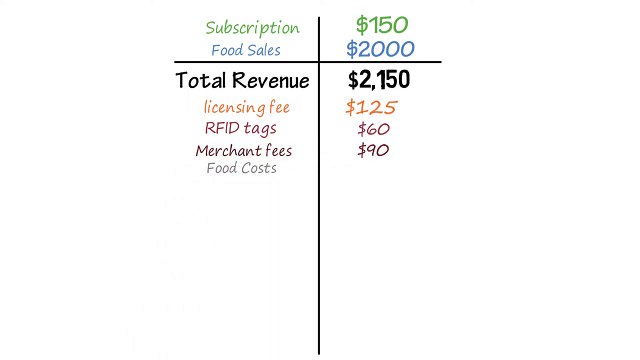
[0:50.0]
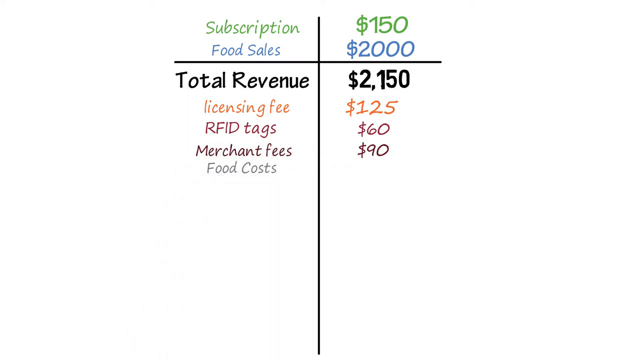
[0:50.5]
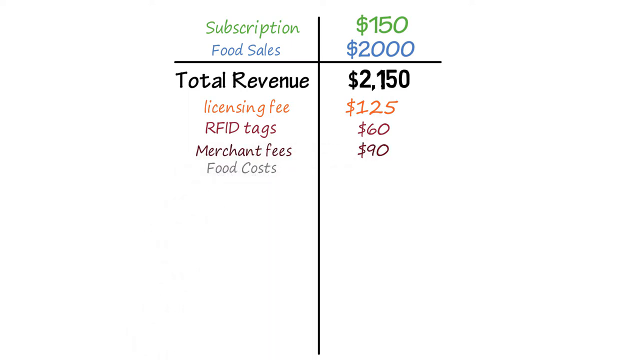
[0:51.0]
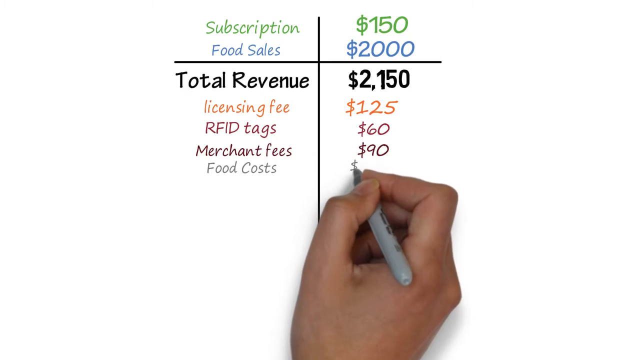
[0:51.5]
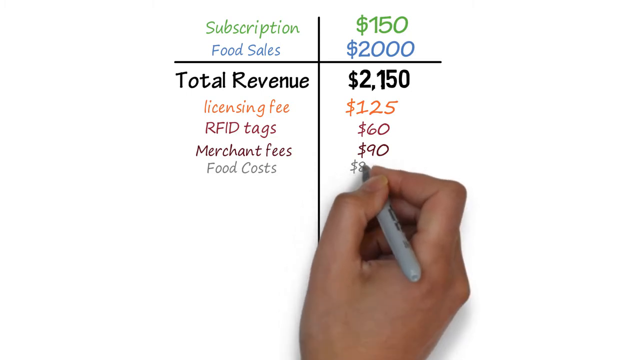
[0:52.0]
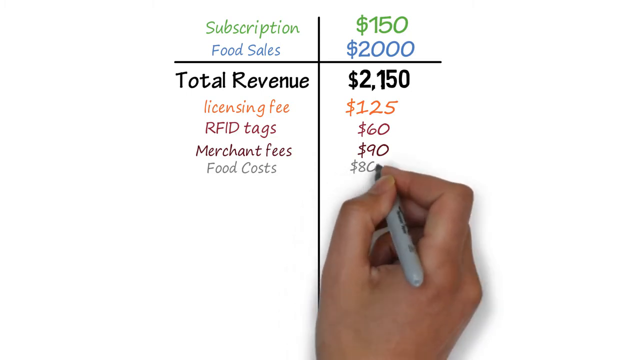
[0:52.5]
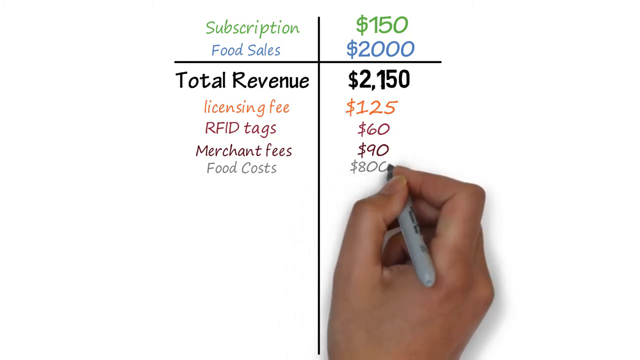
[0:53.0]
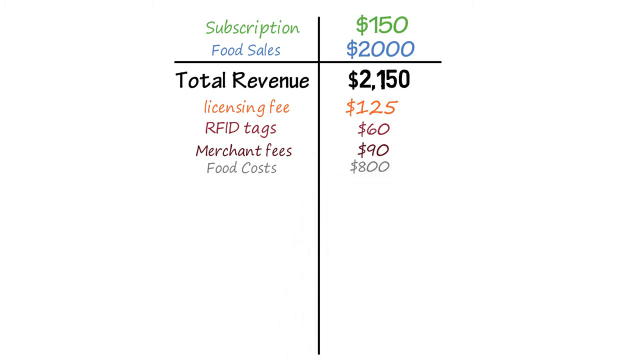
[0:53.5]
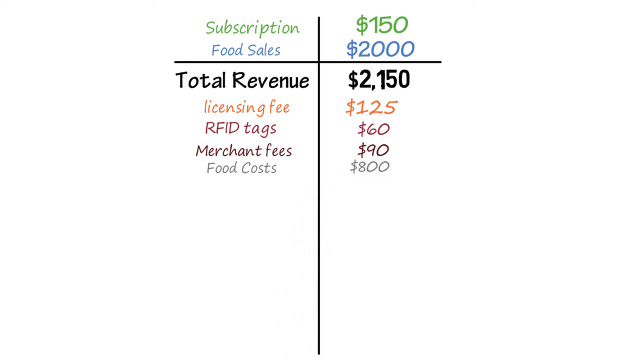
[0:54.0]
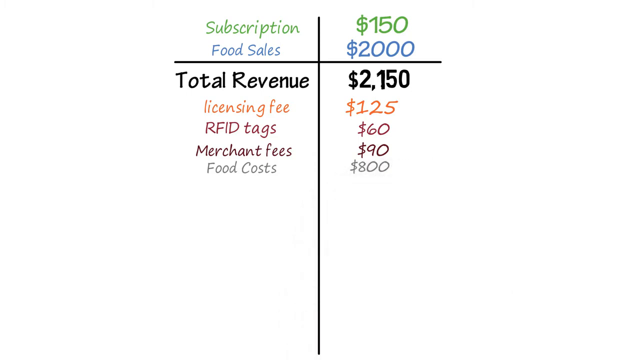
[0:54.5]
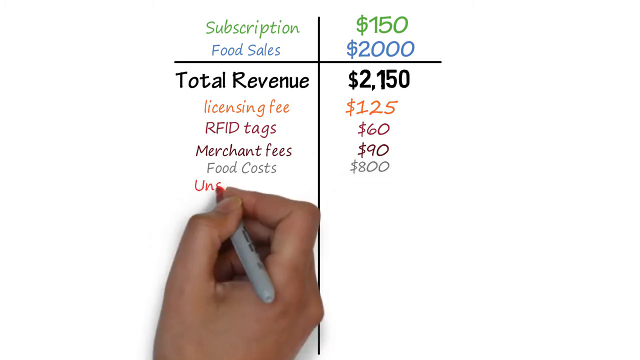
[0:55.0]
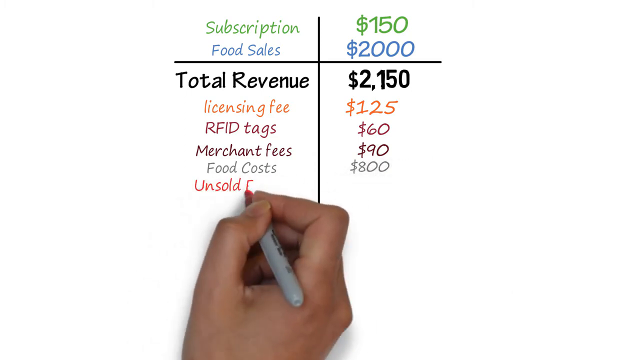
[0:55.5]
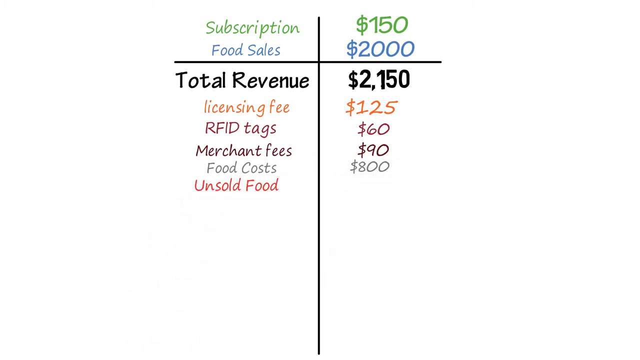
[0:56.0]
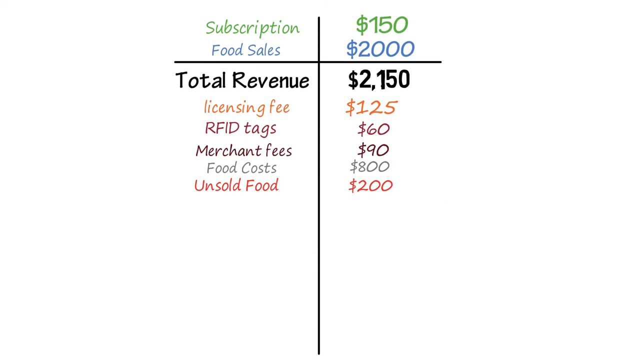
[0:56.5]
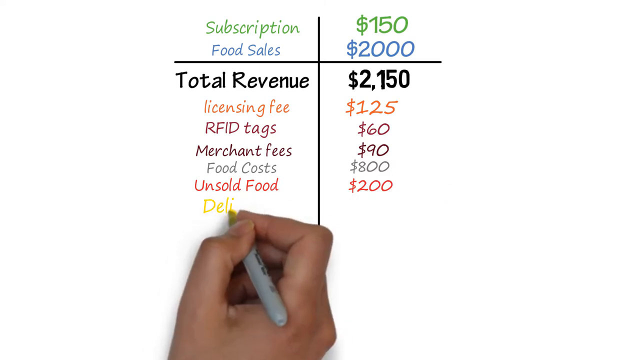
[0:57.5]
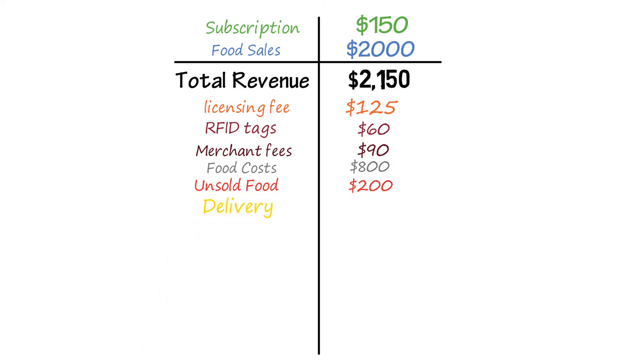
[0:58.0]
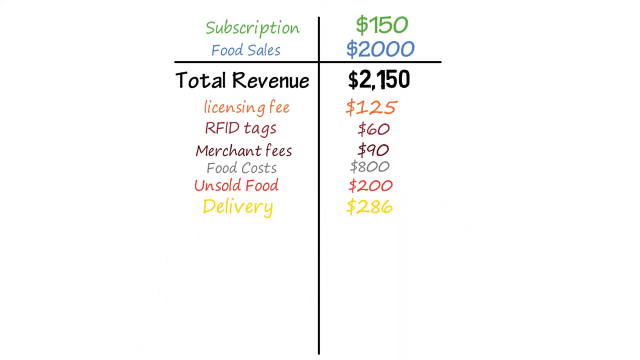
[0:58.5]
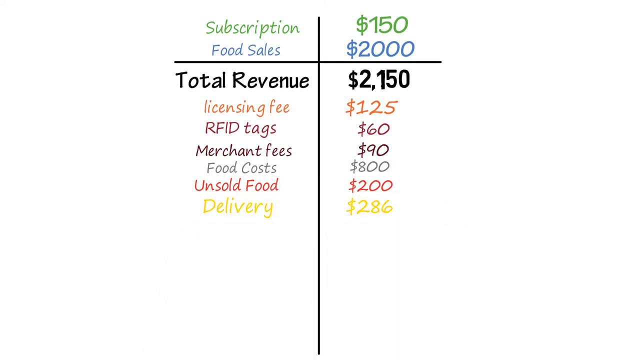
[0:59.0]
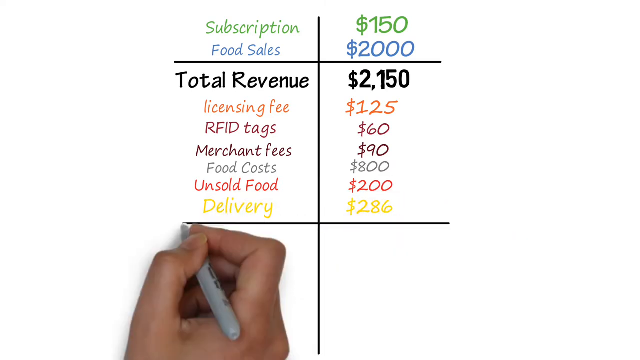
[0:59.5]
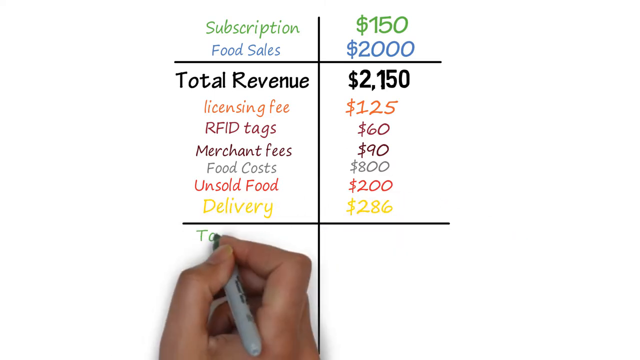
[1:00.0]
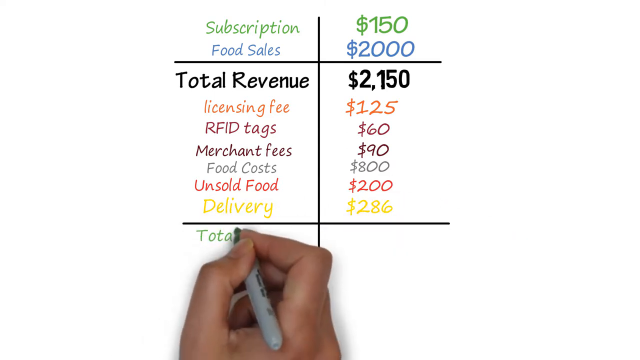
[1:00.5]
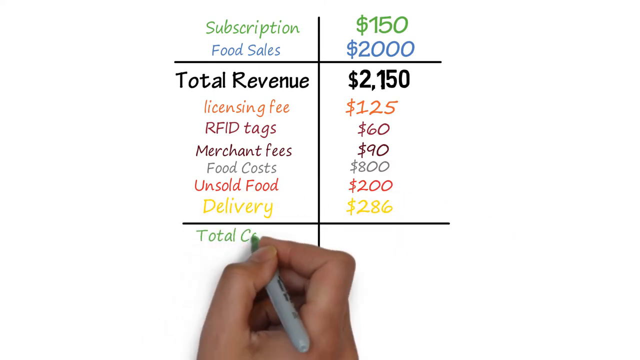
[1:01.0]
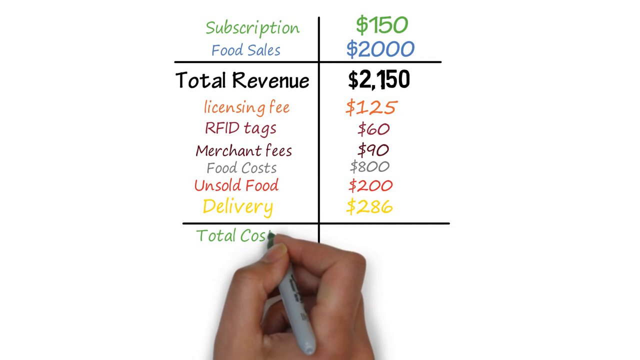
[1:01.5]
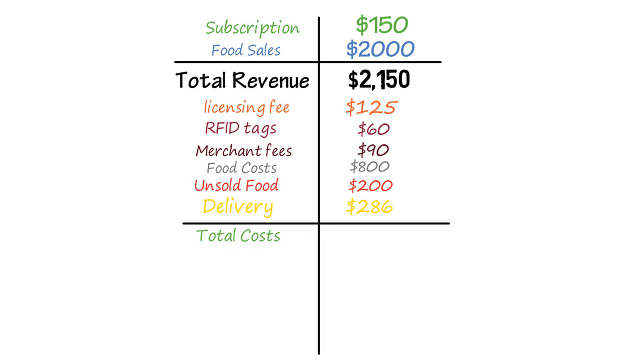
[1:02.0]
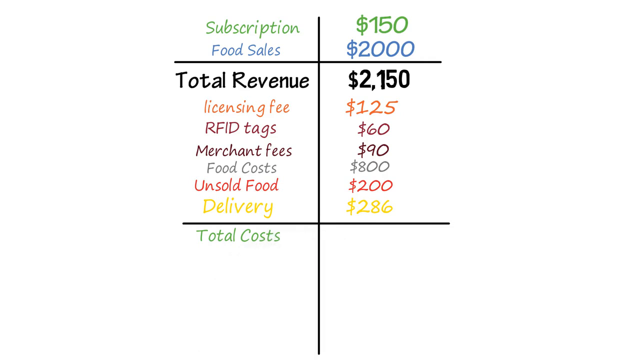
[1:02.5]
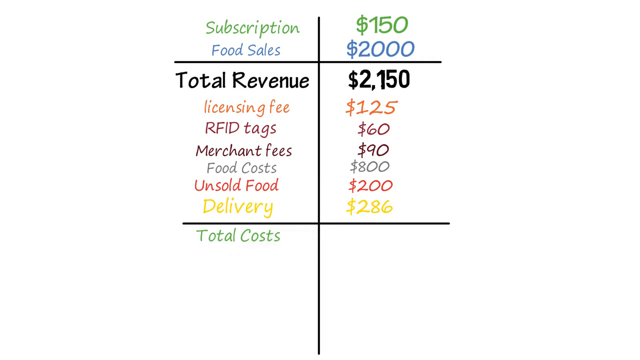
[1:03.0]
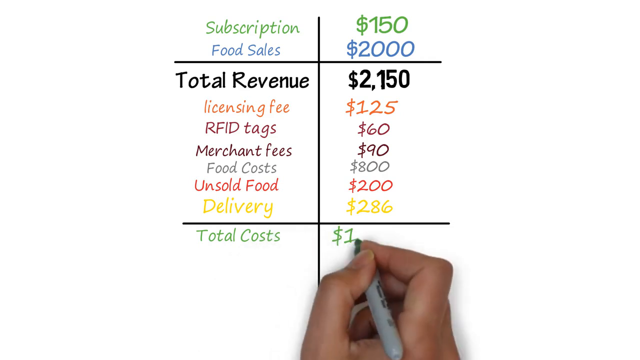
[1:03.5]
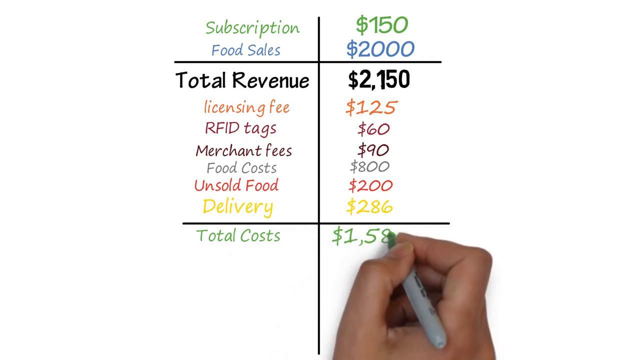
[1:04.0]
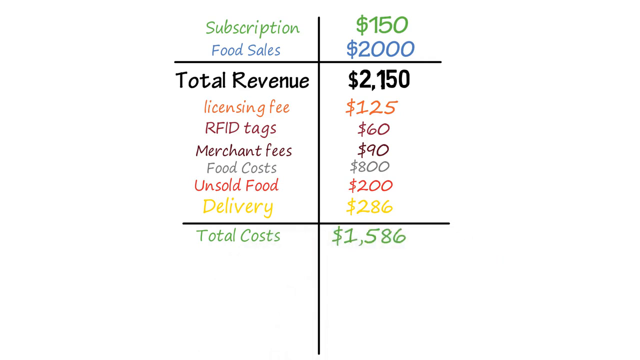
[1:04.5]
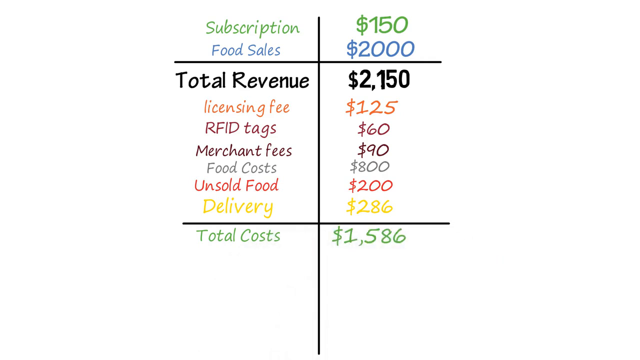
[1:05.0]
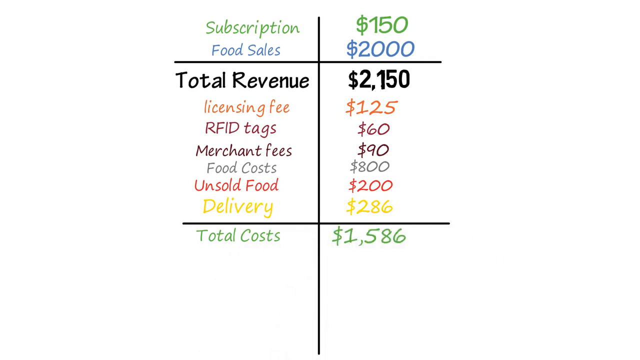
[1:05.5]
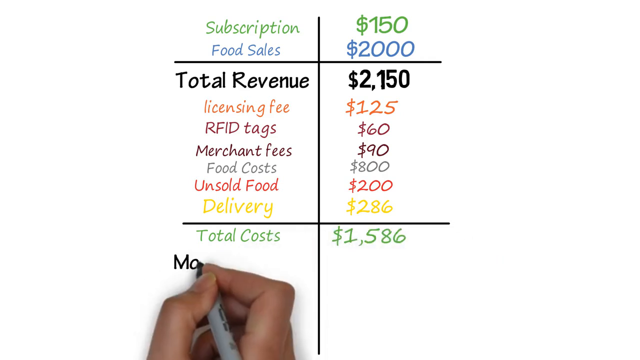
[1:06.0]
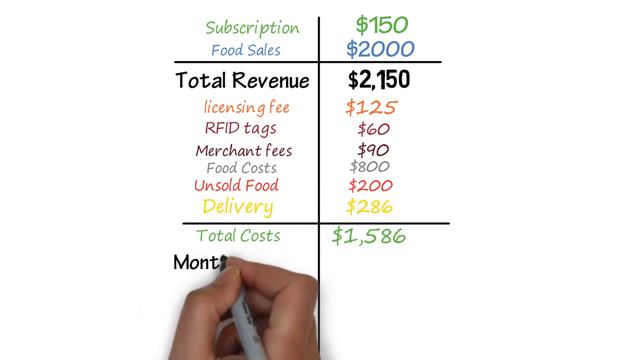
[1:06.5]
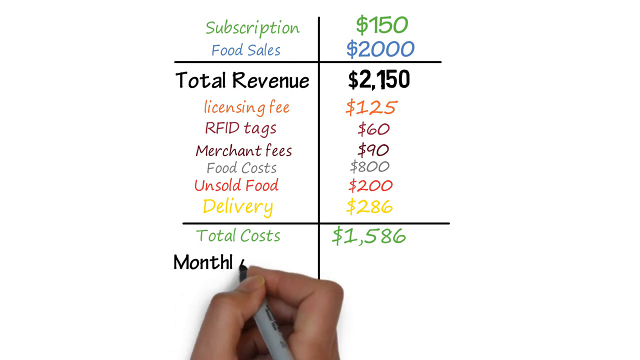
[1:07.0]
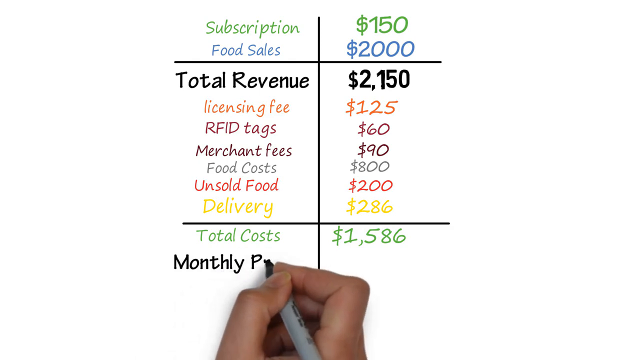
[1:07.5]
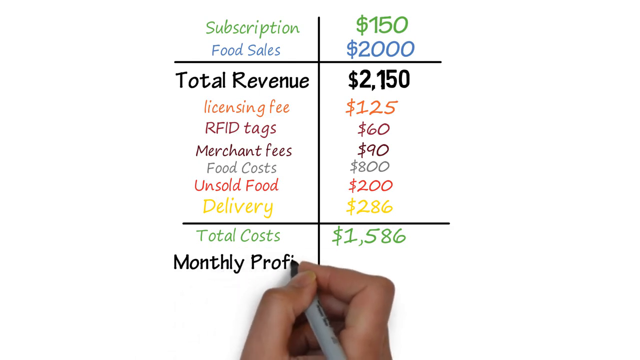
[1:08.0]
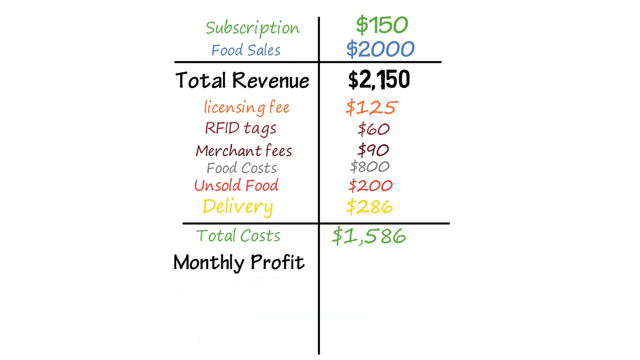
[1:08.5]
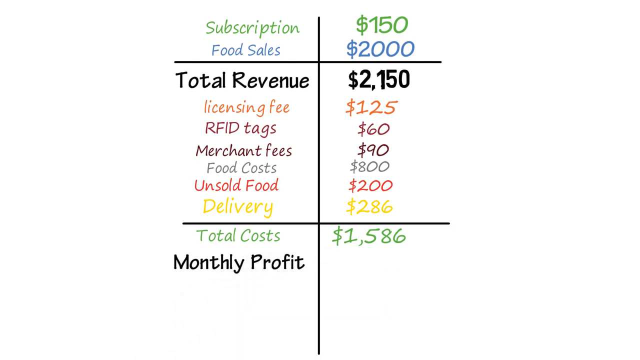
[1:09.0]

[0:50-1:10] The two halves of the division continue to fill up below total revenue and its amount. Six more criteria are added: "licensing fee", "air FID tax", "merchant fees", "food costs", "unsold food" and "delivery", each in a different color that distinguishes them. On the right side of the division, each criterion's amount is written in the same color as that criterion on the left. After the six criteria, another line is drawn crossing the original black line, and in a different ink the text "total costs" is written on the left along with the amount "$101,586". Right beneath them, "monthly profit" is written in the same bold black ink.